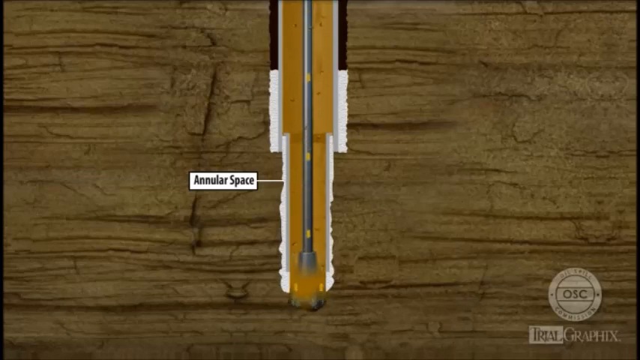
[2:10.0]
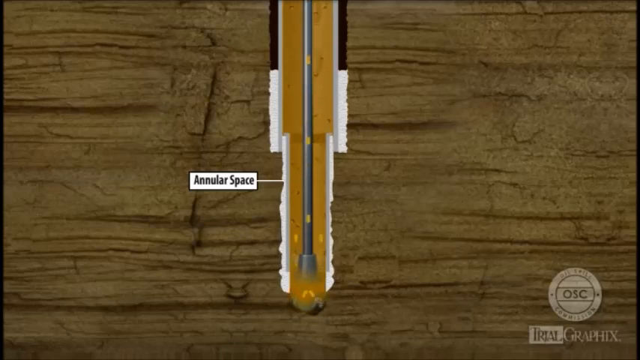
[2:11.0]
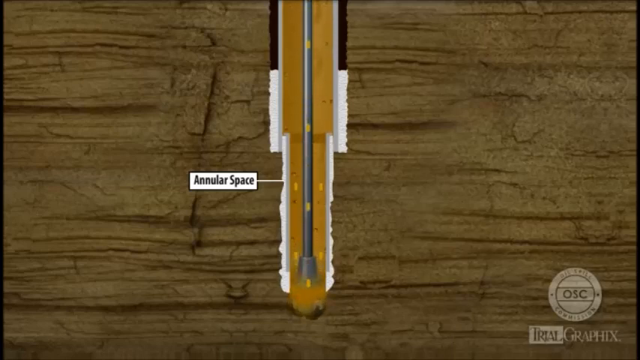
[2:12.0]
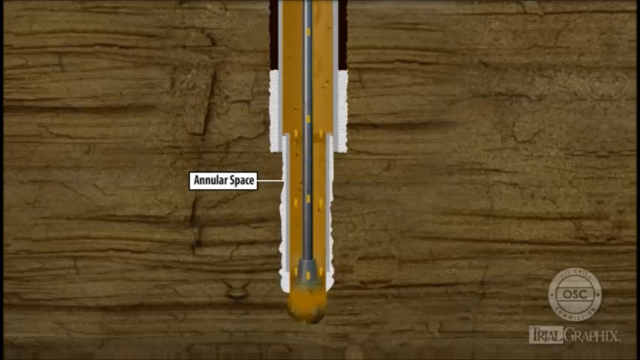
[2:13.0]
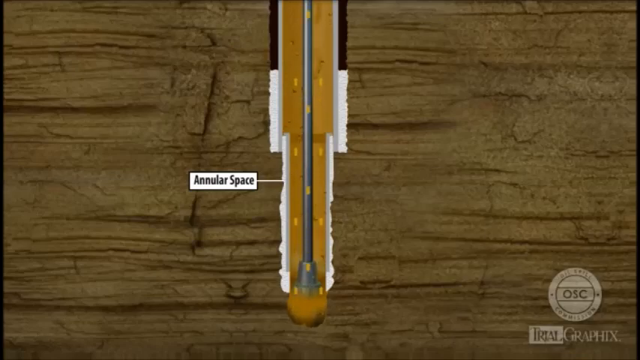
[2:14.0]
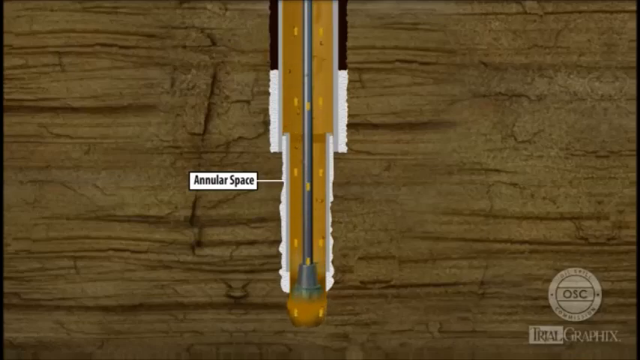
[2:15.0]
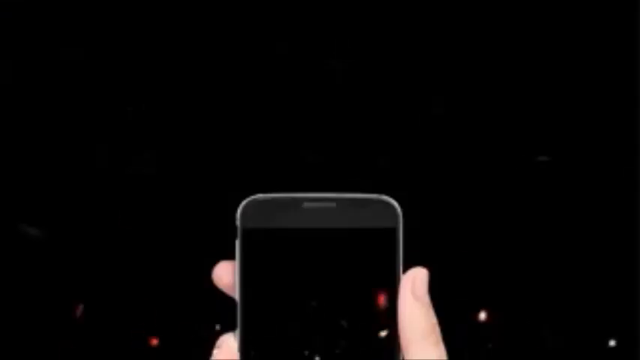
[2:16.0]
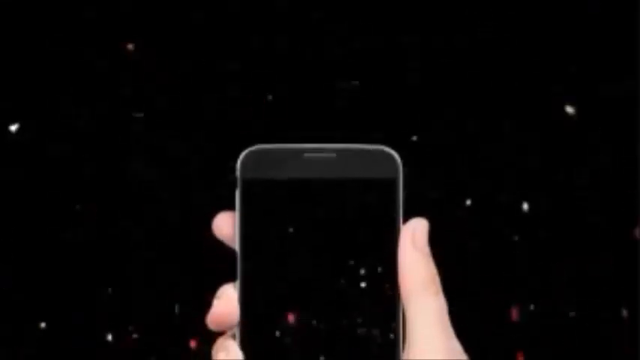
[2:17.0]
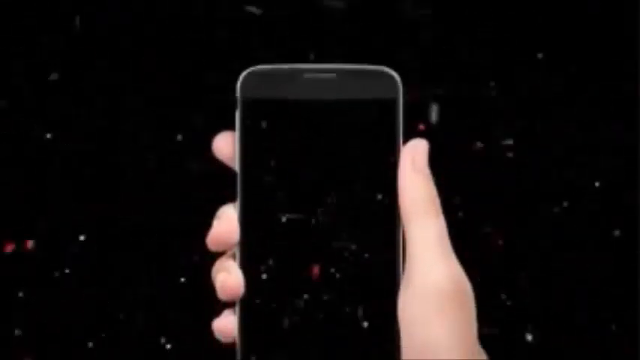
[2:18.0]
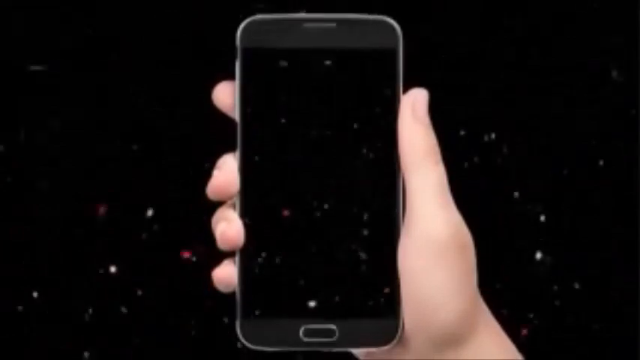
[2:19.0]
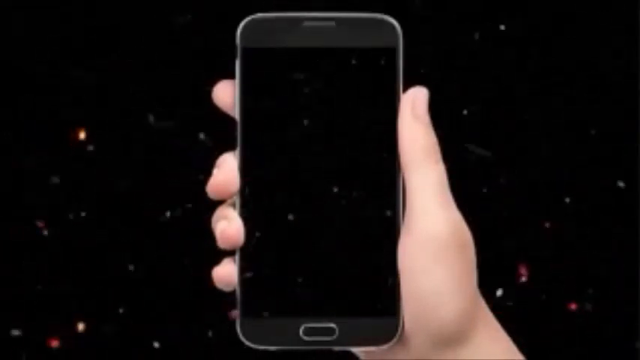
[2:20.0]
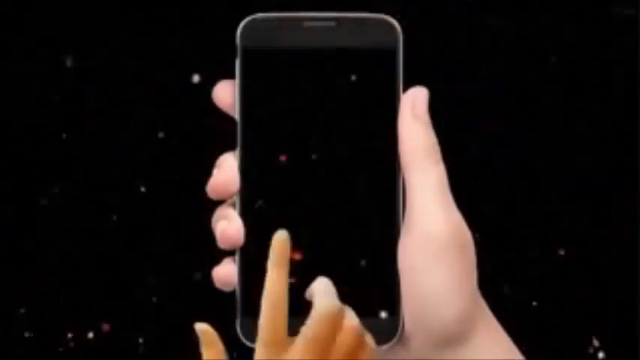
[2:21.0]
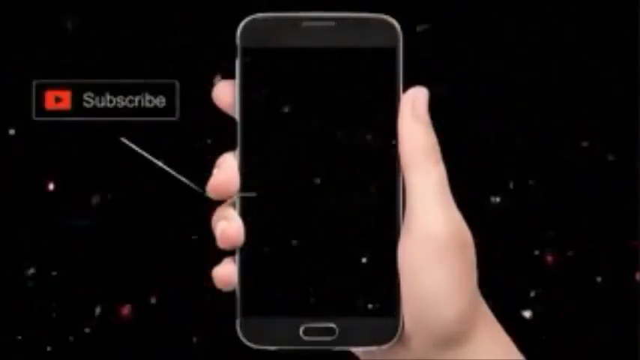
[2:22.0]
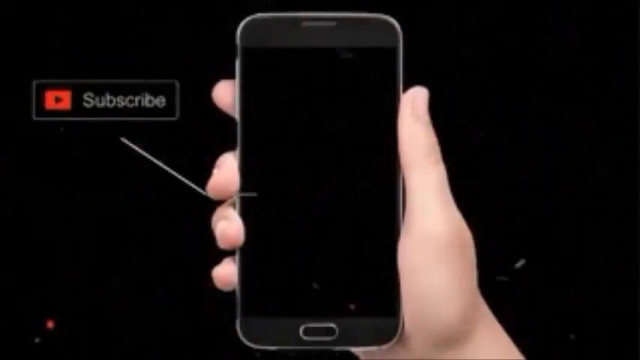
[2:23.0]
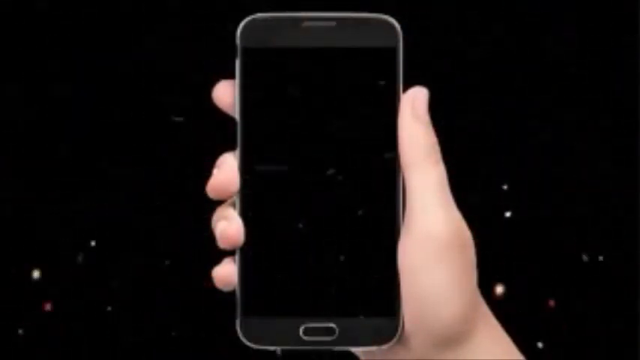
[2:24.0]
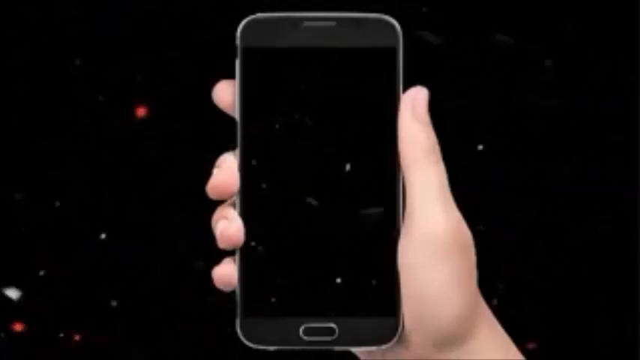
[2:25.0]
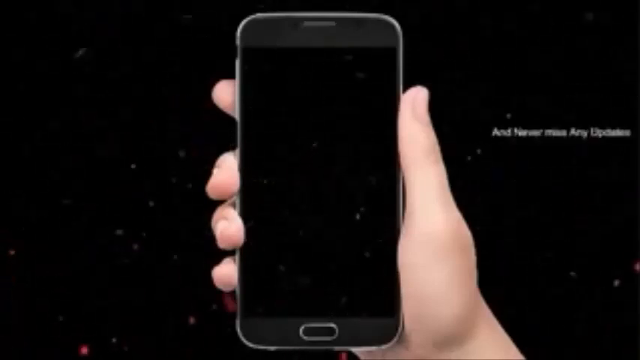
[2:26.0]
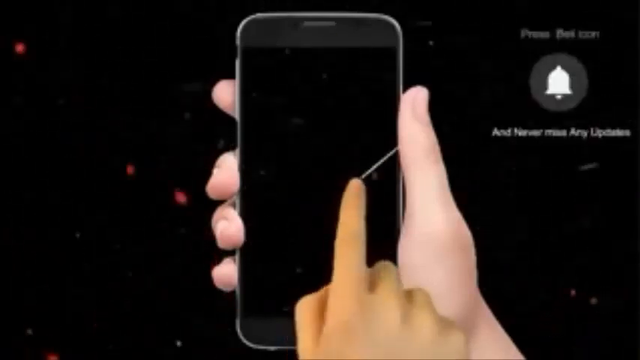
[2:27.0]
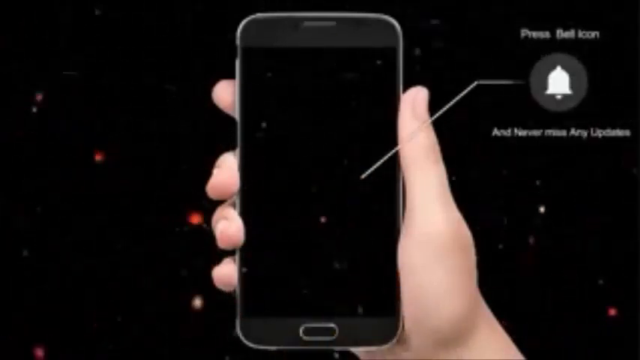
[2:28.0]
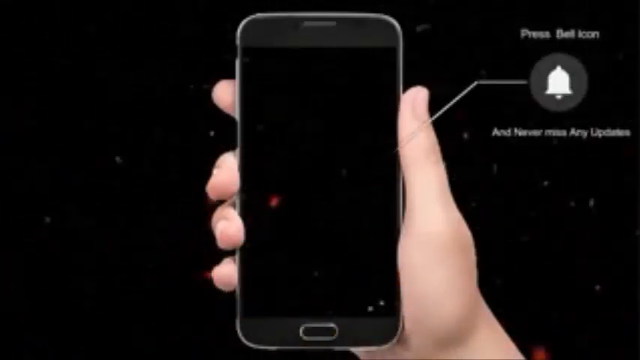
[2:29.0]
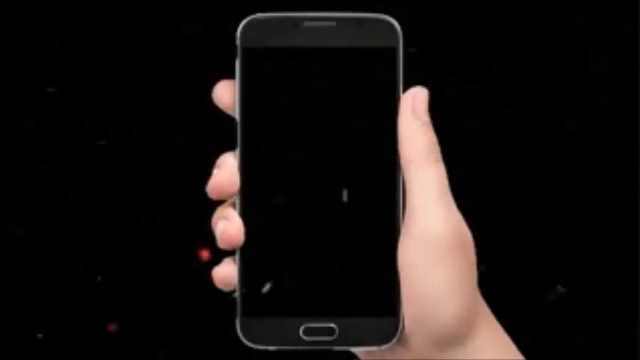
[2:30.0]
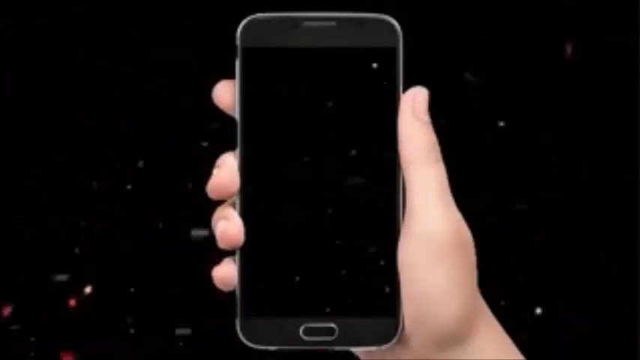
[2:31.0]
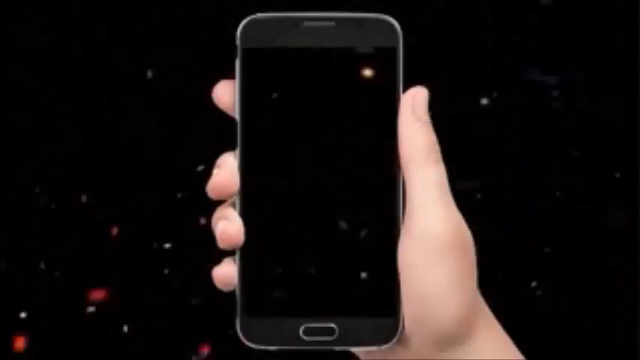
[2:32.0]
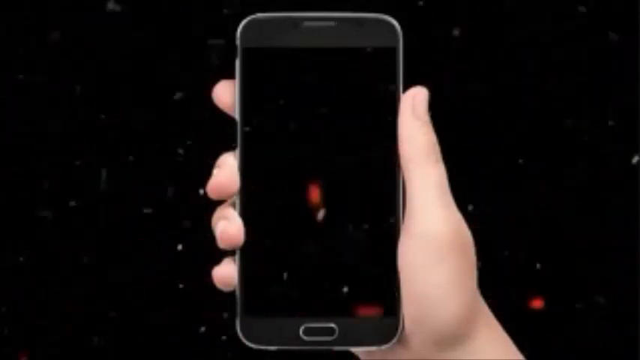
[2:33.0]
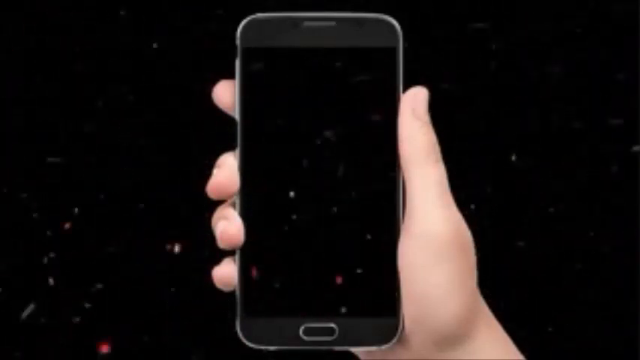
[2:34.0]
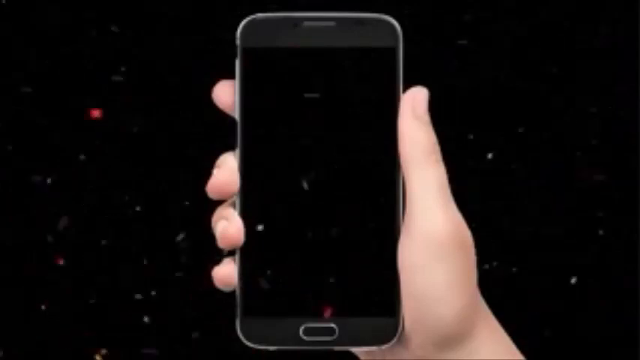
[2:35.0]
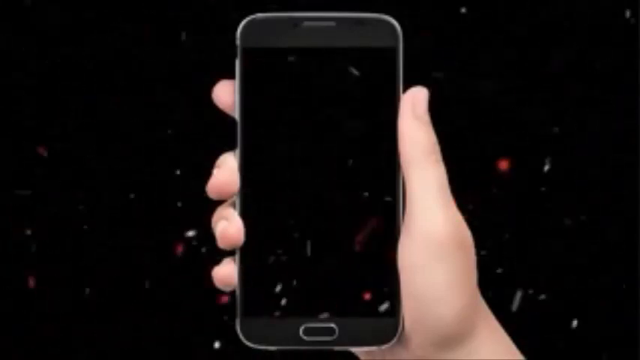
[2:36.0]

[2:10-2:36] The gray drill is at the very bottom of the hole it made in the round block of wood. To its left, the words "annular space" appear in small black font in a white rectangular frame, pointing toward an area beside the hole. Golden particles flow upwards out of where the drill began. The frame then cuts to a white hand holding a phone with a black screen, moving slowly upwards into frame. What looks to be glitter or multicolored particles flow throughout a black space. To the left is the word "subscribe", and to the left of that is a red block with a play sign, possibly referring to YouTube, within a rectangular frame. To the right are the words "Press Bell Icon" with a bell icon below them.